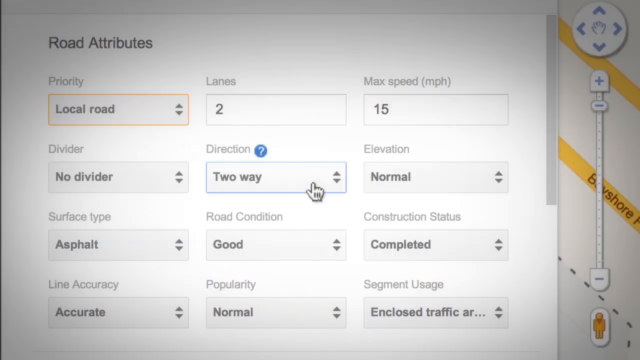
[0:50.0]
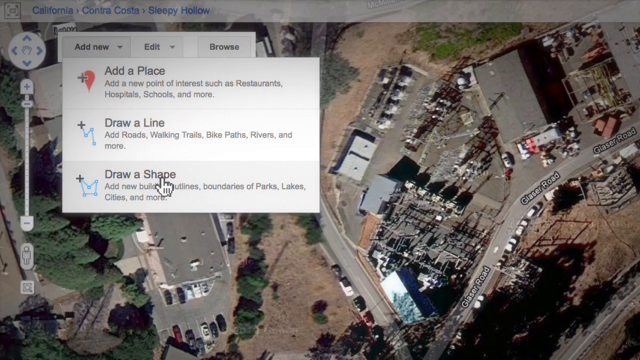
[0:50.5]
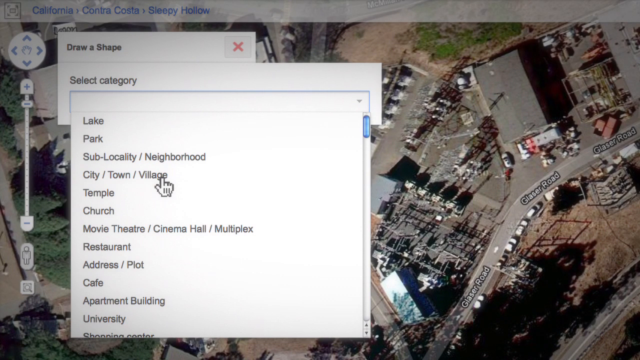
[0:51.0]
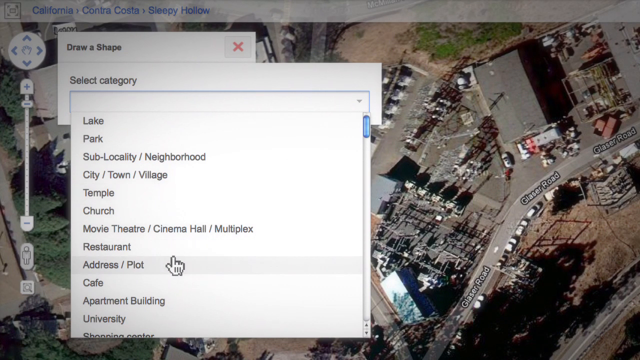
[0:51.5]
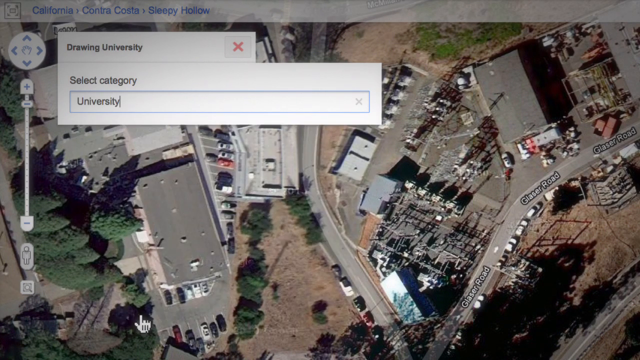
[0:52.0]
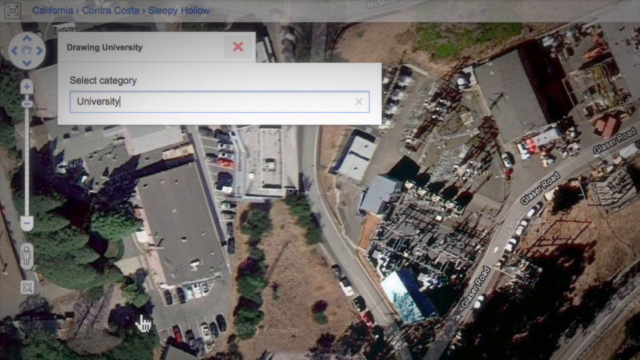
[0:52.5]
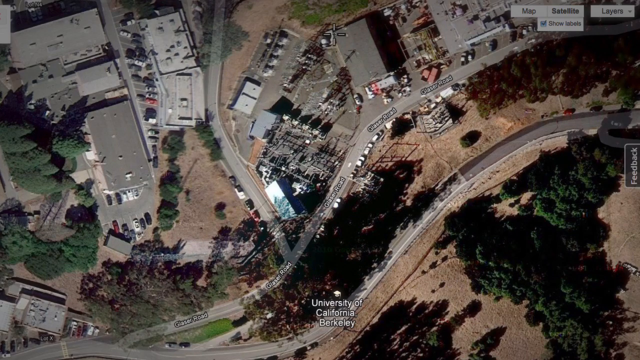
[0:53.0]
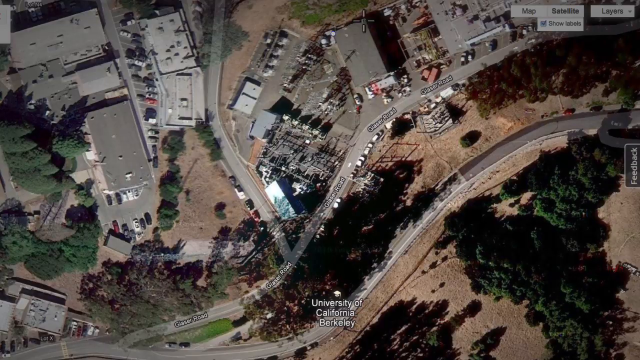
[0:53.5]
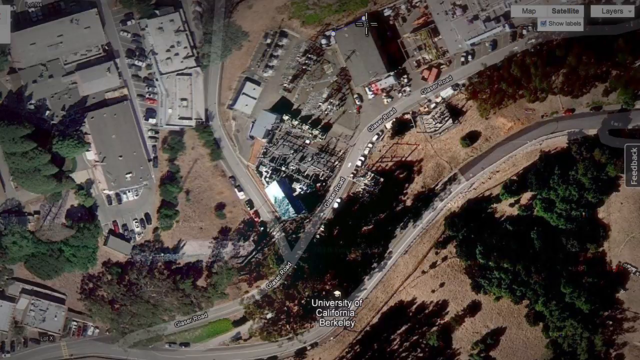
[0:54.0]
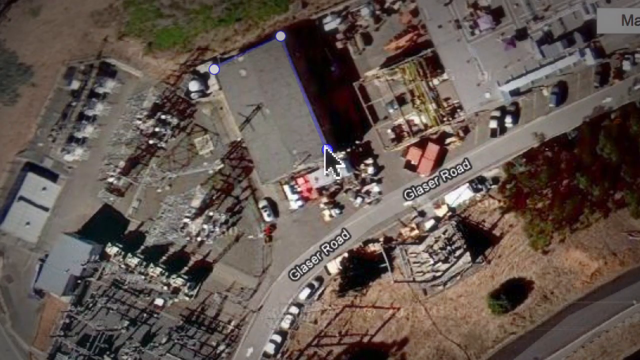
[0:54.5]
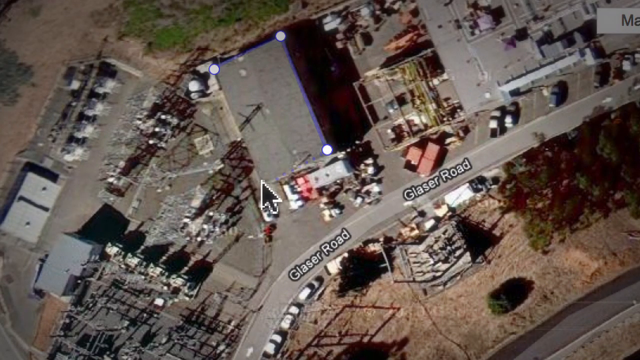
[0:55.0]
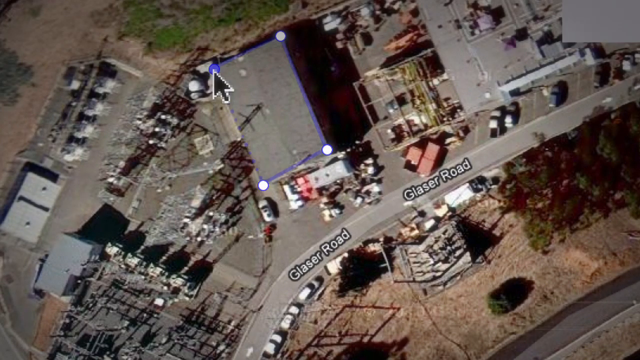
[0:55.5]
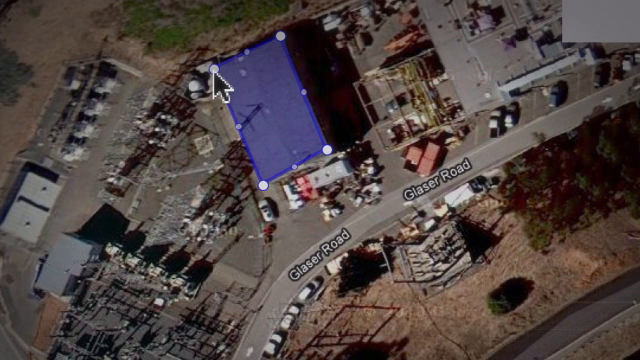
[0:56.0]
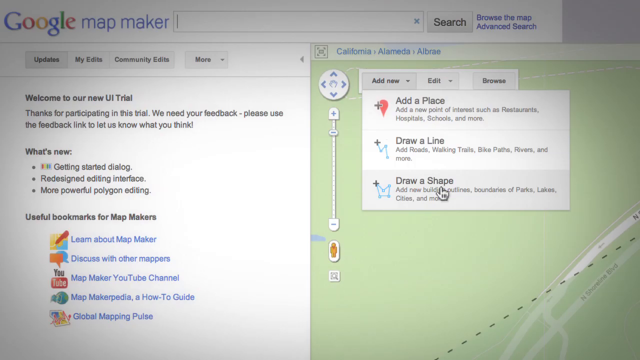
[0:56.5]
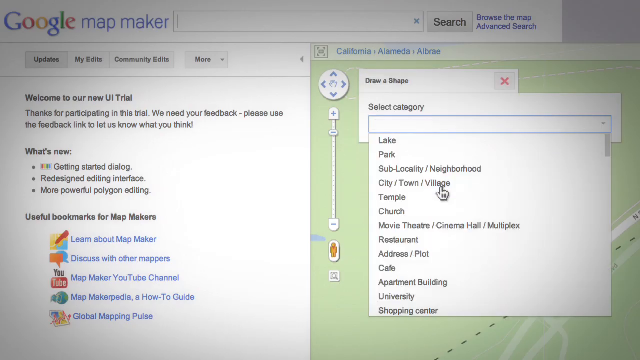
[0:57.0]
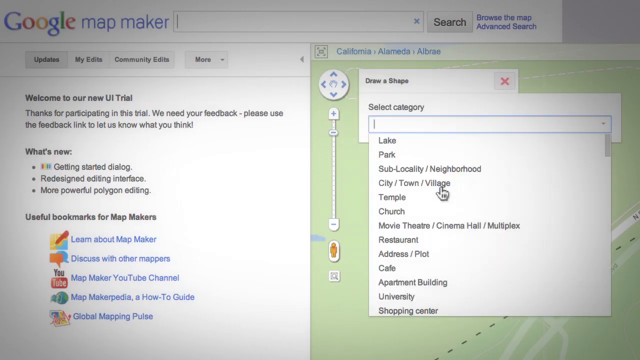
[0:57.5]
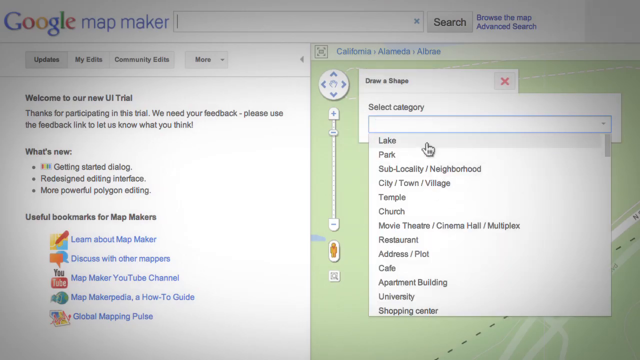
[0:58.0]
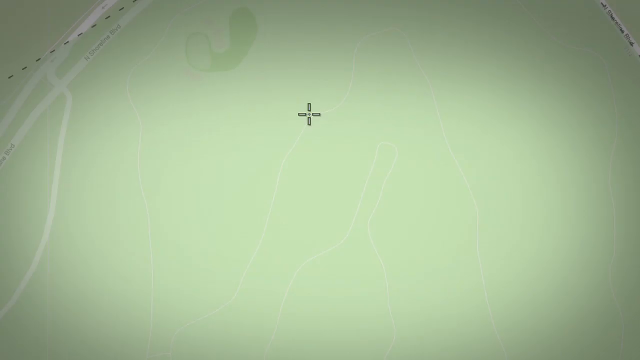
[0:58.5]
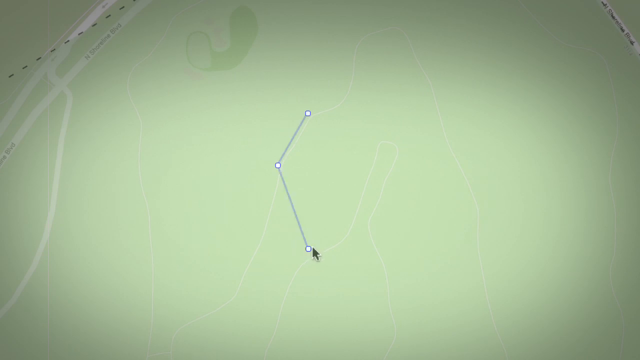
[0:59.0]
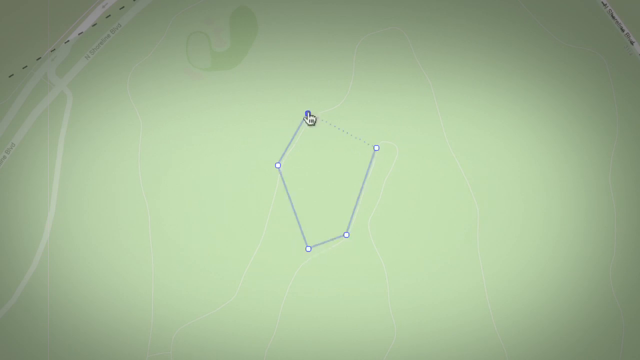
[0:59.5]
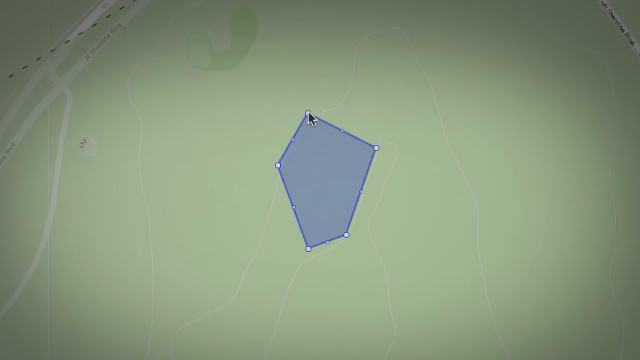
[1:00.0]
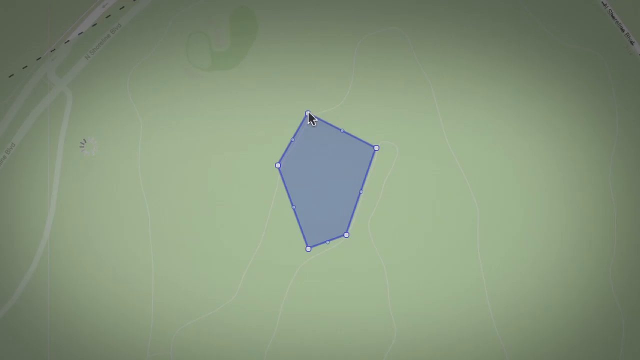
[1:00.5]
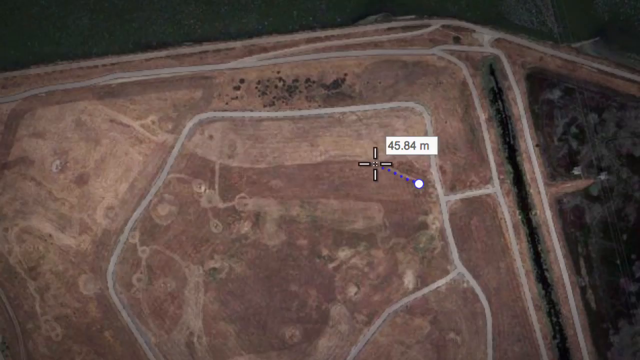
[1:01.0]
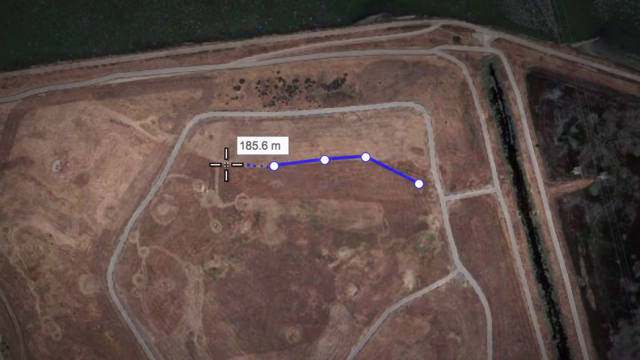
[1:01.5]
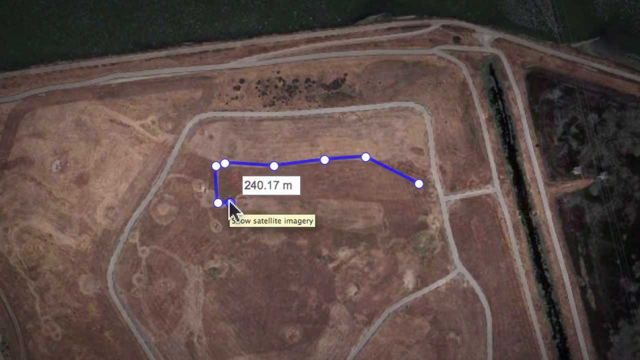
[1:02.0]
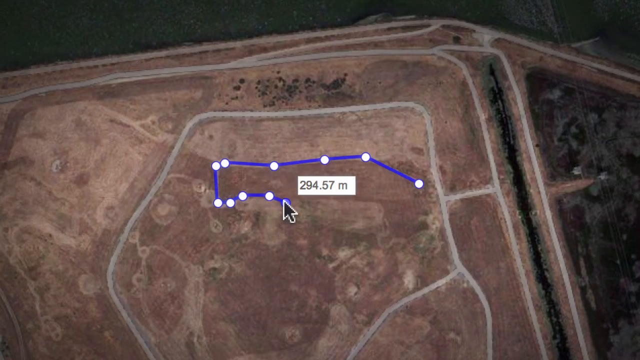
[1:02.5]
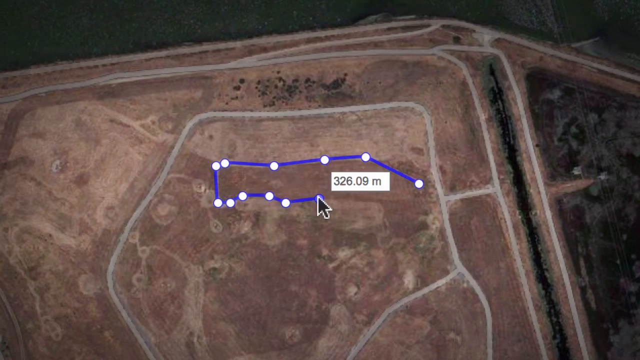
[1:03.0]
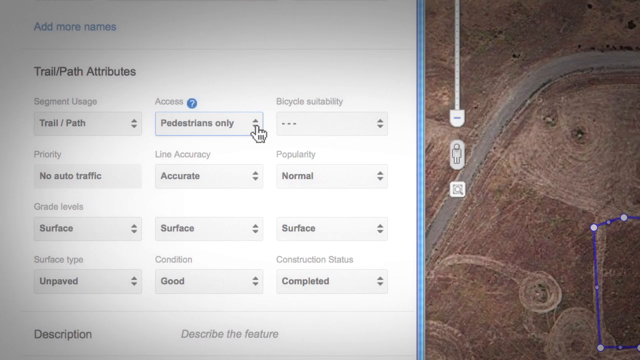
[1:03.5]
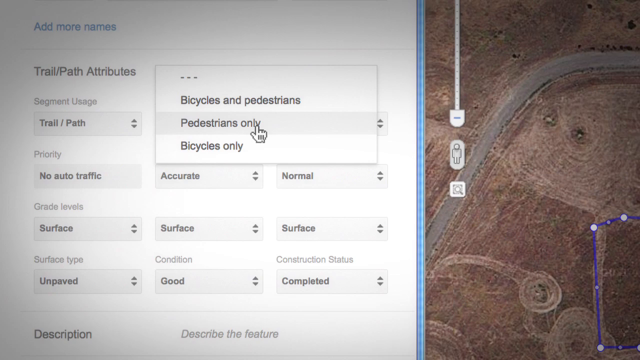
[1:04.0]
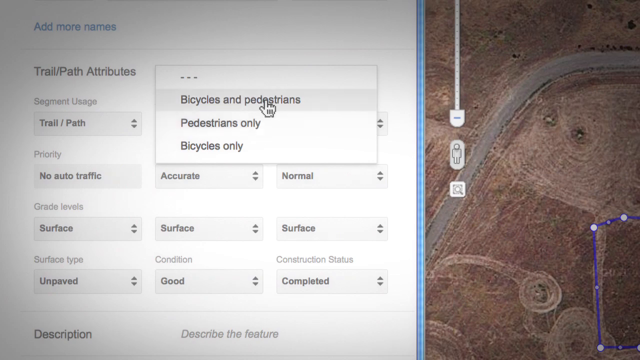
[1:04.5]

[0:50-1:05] Different categories that can be selected for the maps are shown, along with features such as drawing lines and making pinpoints. The view zooms in on different buildings with real photos of them. Different pathways such as bicycle or automobile can be chosen, and other selectable options include universities and other types of buildings.